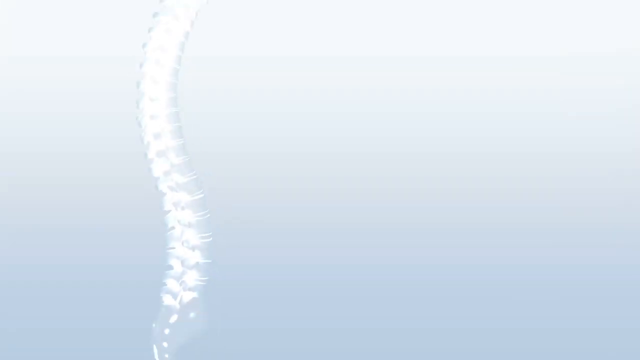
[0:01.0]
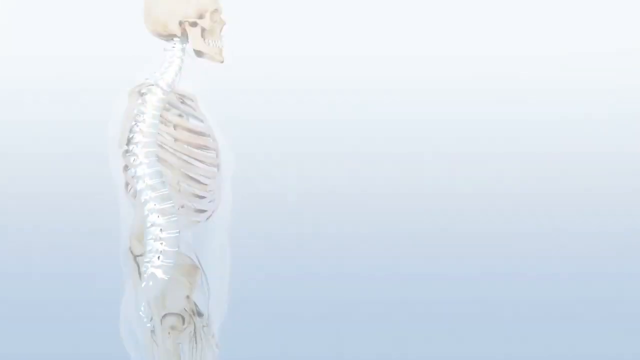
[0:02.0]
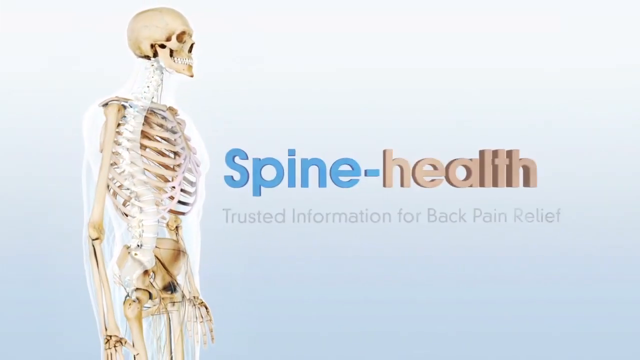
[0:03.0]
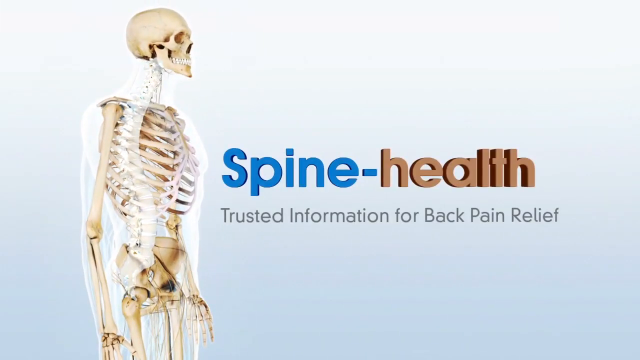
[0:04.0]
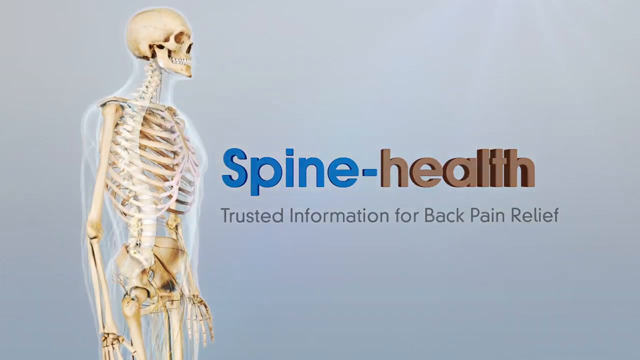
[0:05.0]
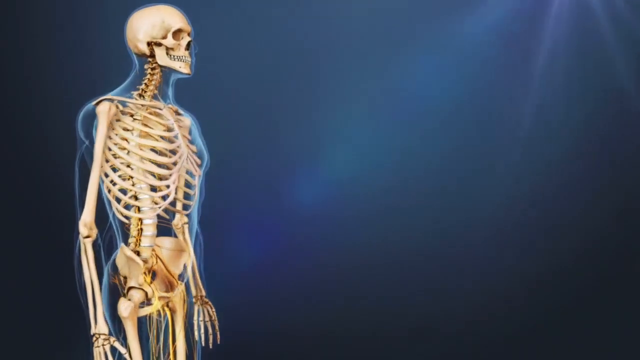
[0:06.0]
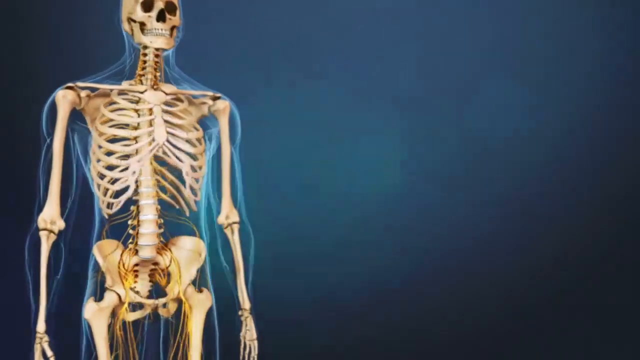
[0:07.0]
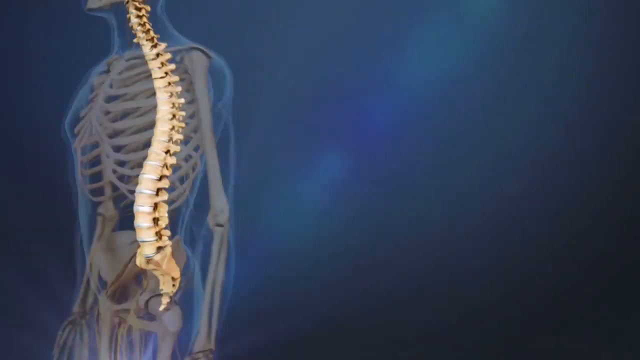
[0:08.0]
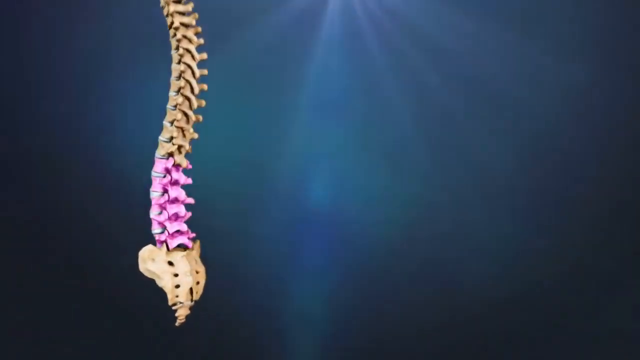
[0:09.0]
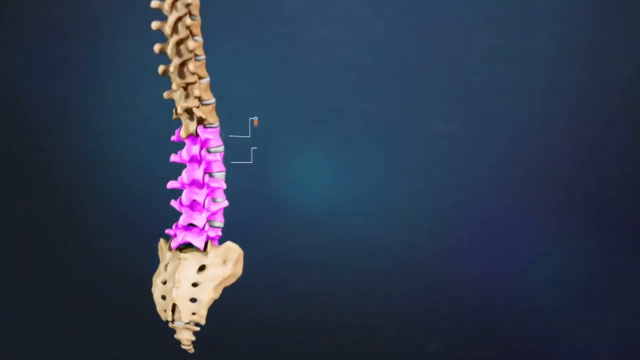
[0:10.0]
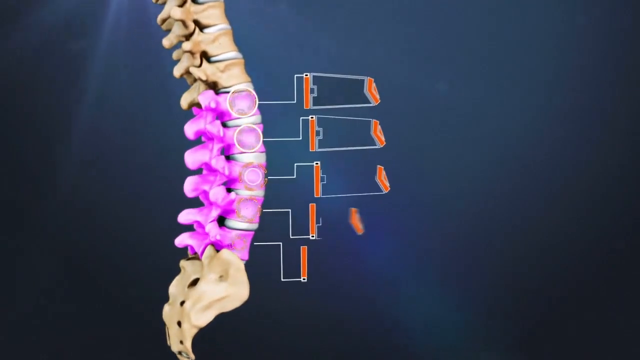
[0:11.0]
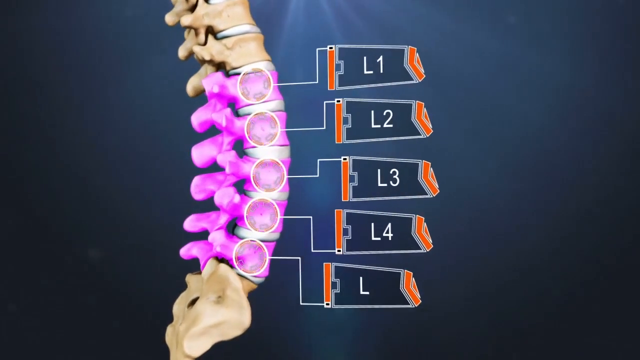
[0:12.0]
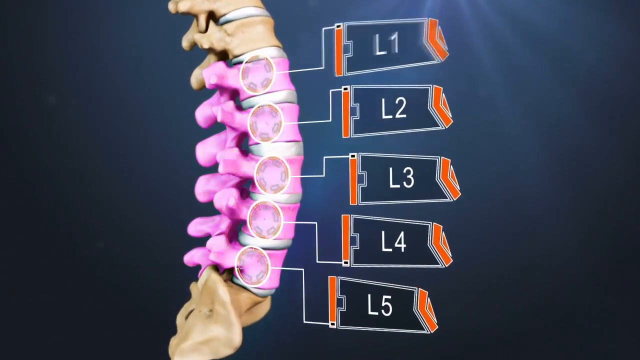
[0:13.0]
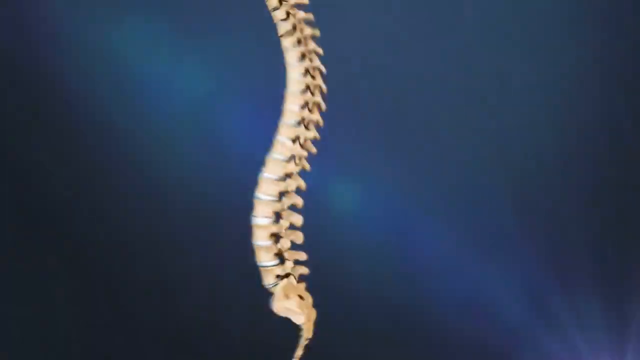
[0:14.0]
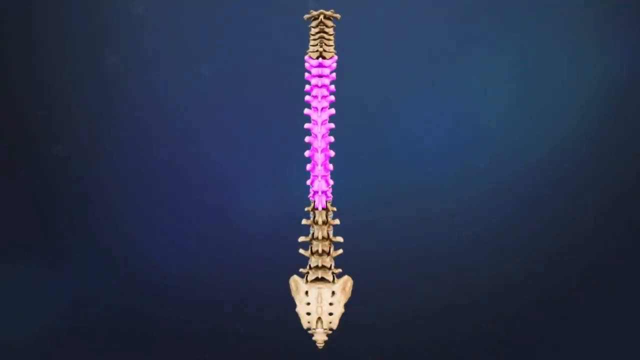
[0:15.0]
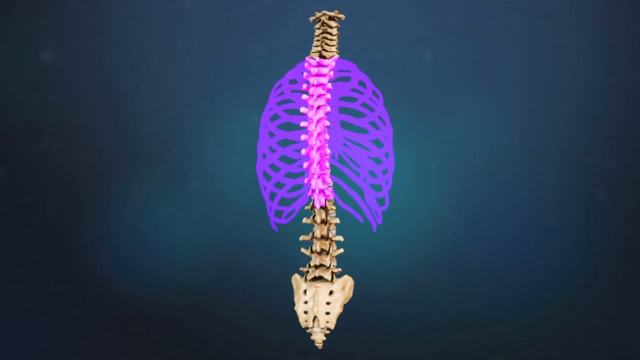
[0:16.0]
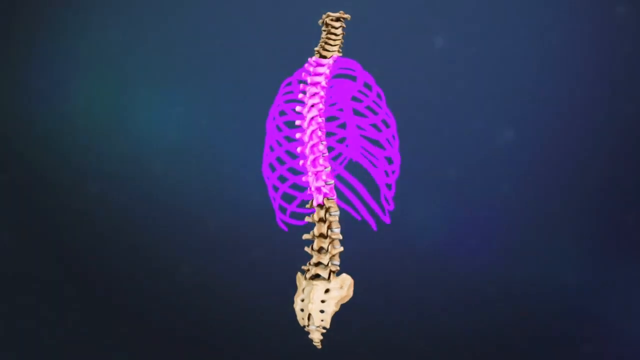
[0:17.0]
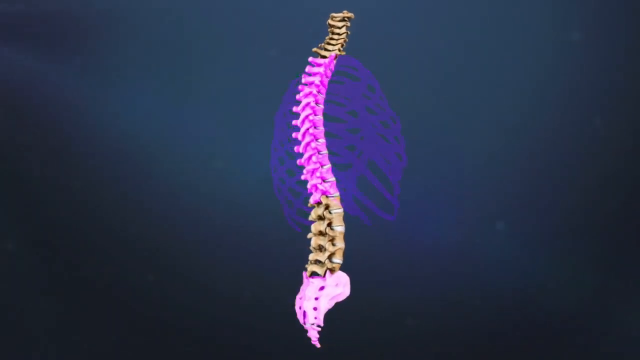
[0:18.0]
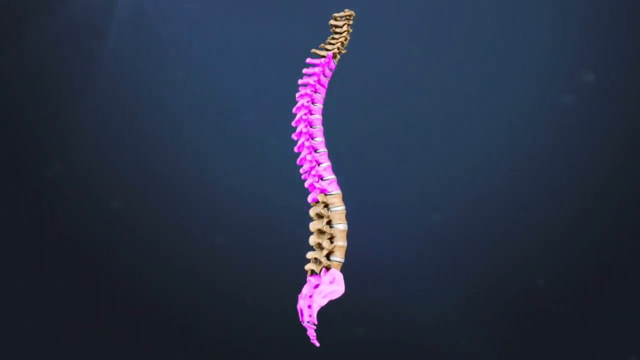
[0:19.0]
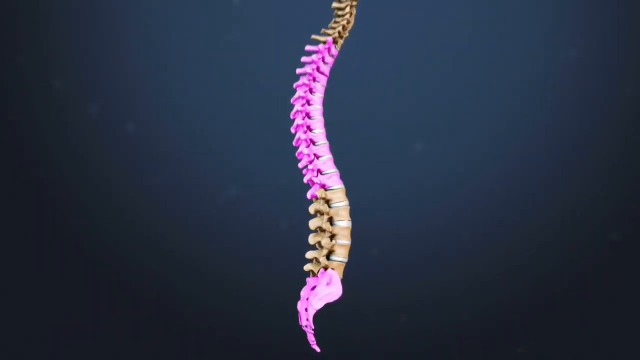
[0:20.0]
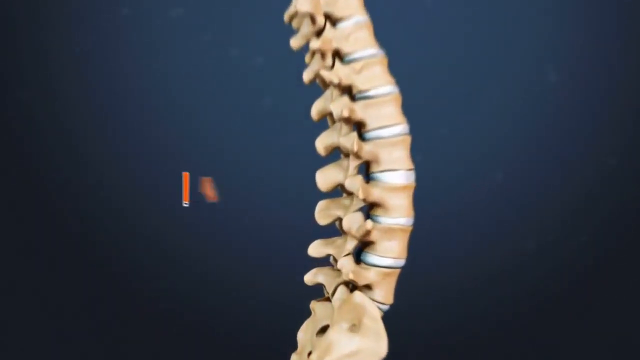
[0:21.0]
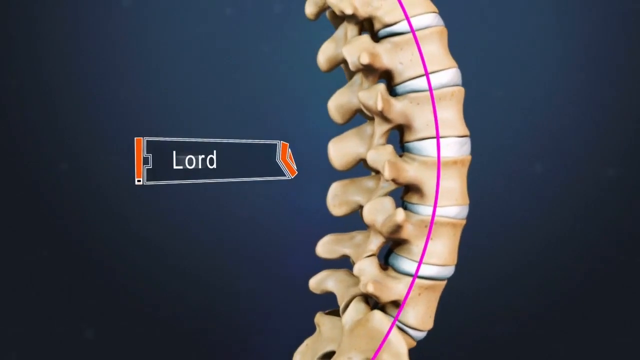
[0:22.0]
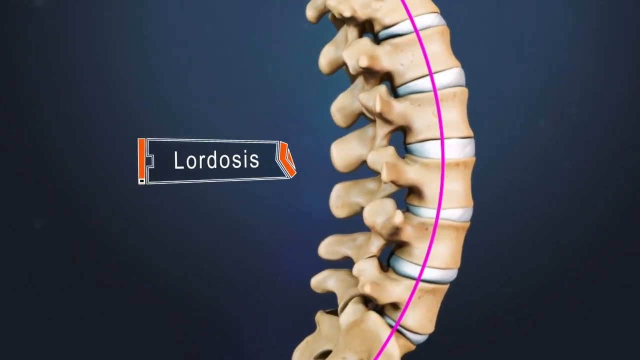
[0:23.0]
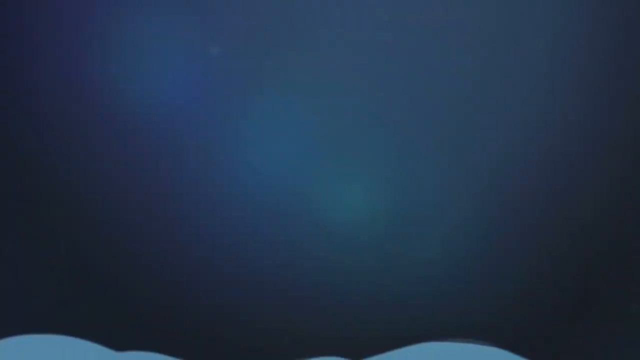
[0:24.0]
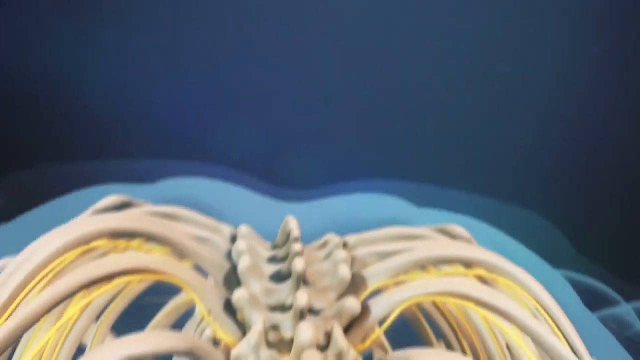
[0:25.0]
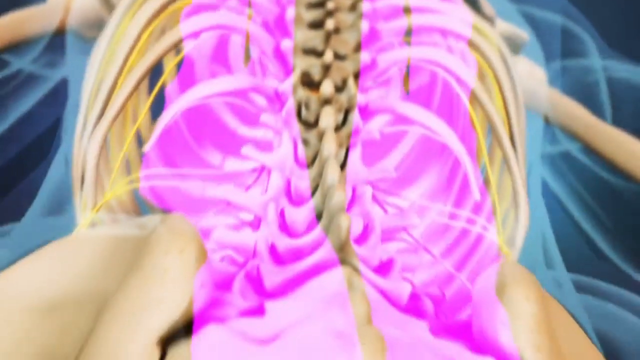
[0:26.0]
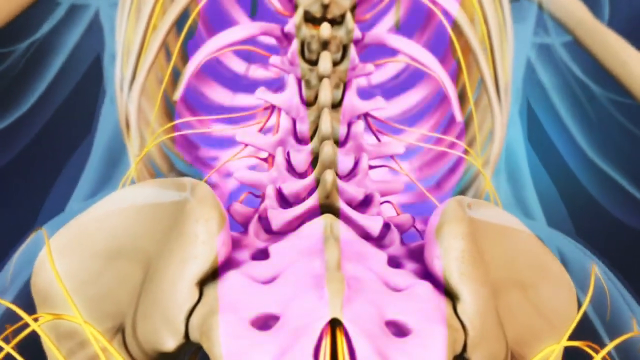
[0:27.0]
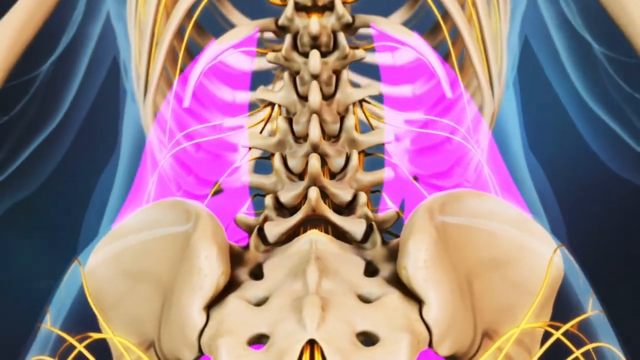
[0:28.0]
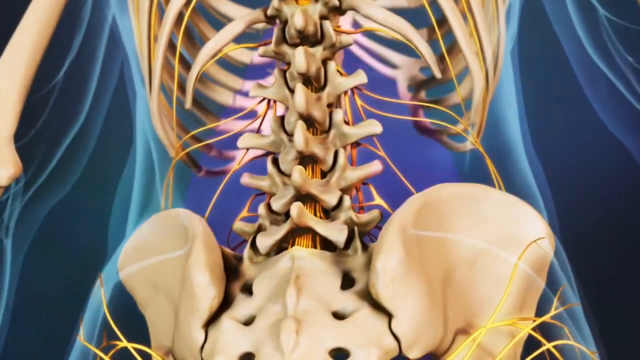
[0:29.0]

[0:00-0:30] The video opens with an image of a skeleton on the left side of a white screen, and on the other side is text reading "spine-health," with "spine-" in blue and "health" in orange; under it is the text "trusted information for back pain relief." The white background then disappears, giving way to a blue background as the view zooms in and rotates around the skeleton's spine. Some of the vertebrae down the spine are highlighted, with labels coming out for the L1, L2, L3, L4 and L5 vertebrae. The view then backs out to show the upper levels of the spine, apparently those attached to the rib cage, before zooming back in on the curvature of the spine in the lower back, which is labeled "lordosis." A slowly panned-up view of the spine follows, with other areas highlighted.